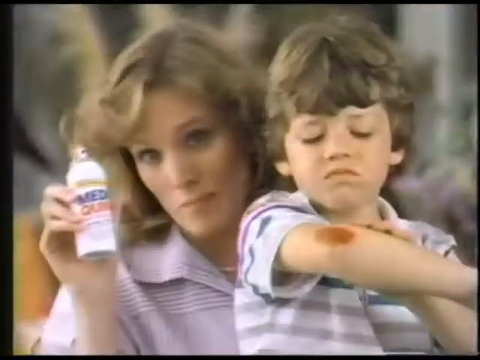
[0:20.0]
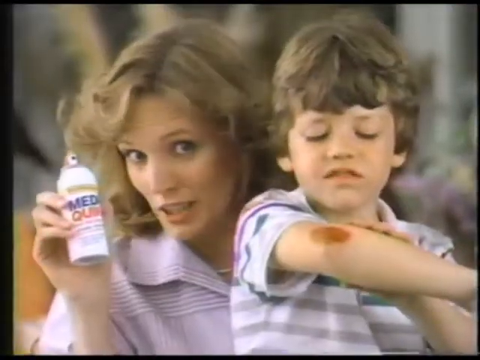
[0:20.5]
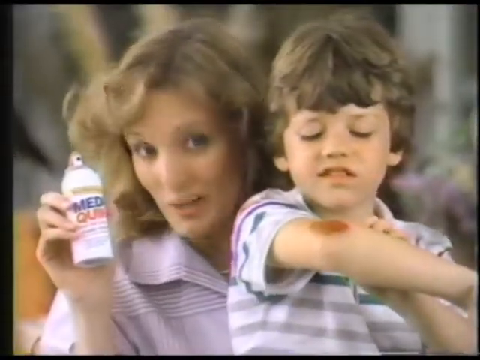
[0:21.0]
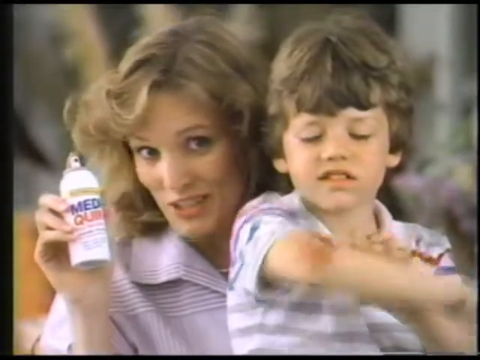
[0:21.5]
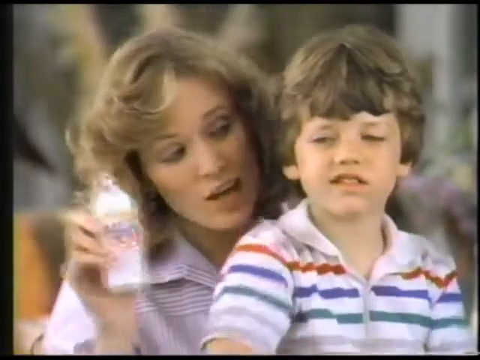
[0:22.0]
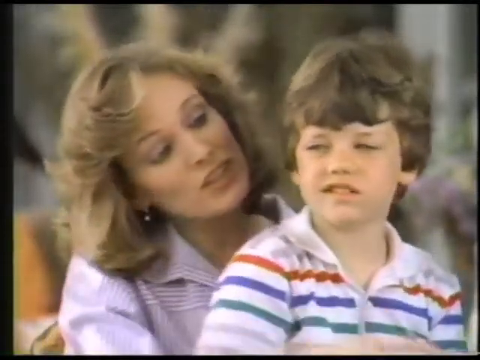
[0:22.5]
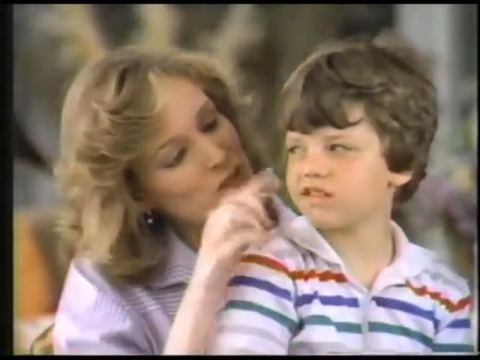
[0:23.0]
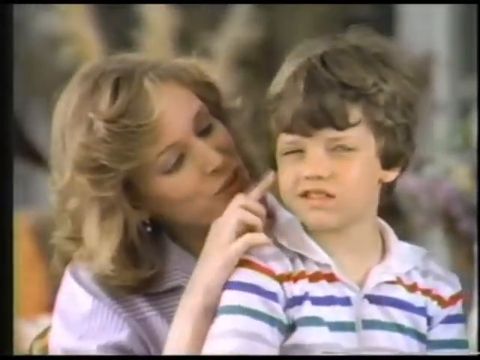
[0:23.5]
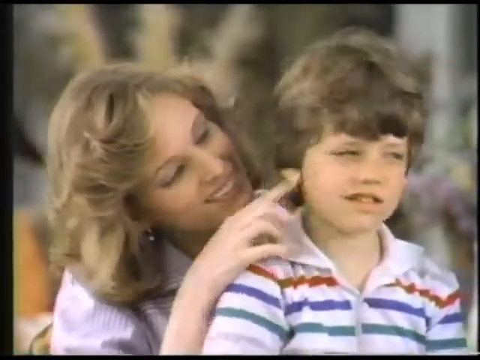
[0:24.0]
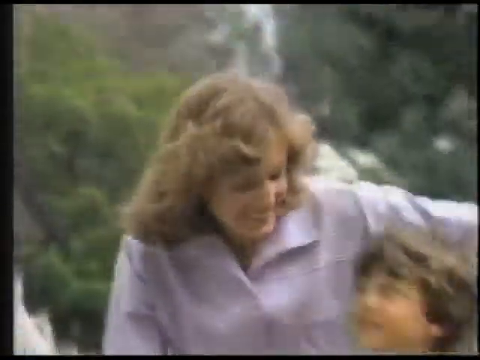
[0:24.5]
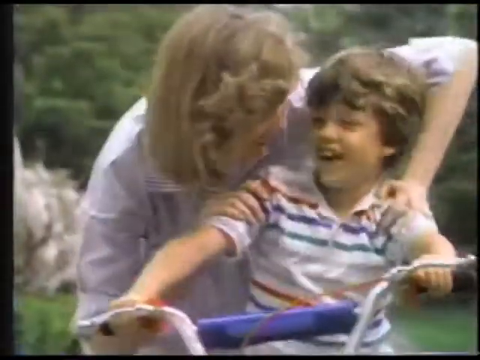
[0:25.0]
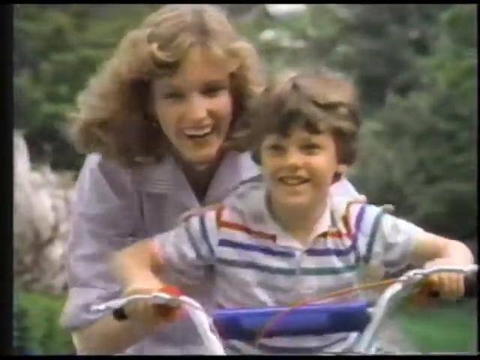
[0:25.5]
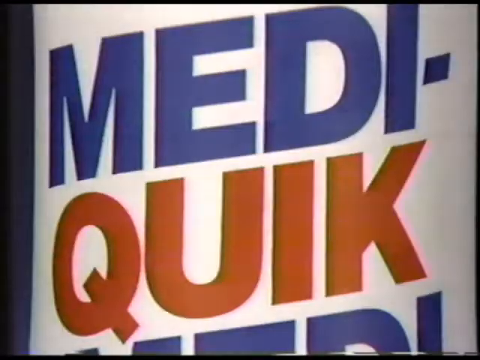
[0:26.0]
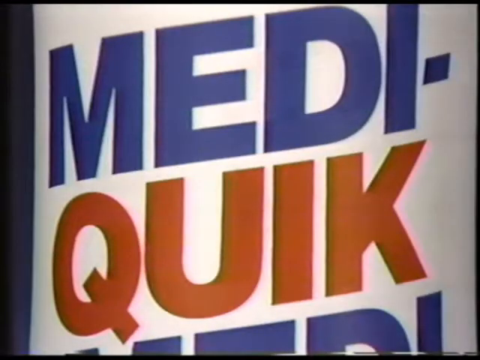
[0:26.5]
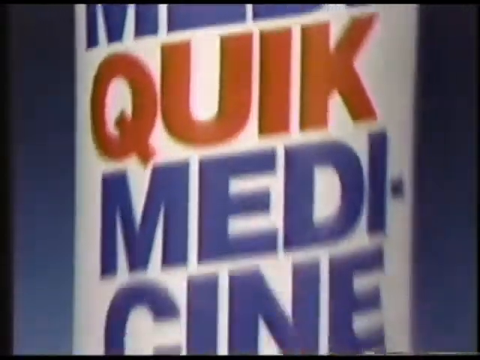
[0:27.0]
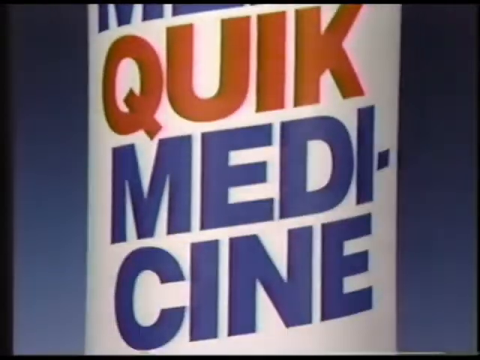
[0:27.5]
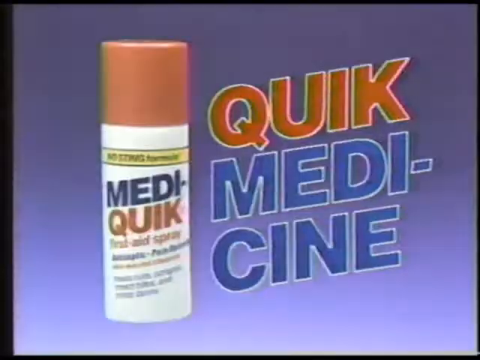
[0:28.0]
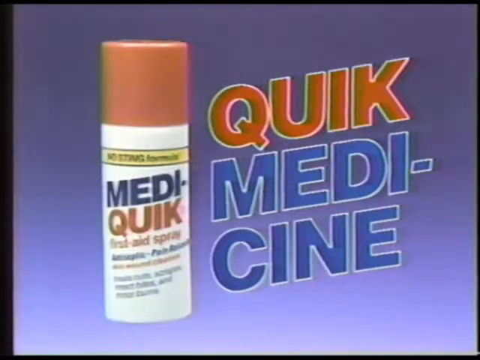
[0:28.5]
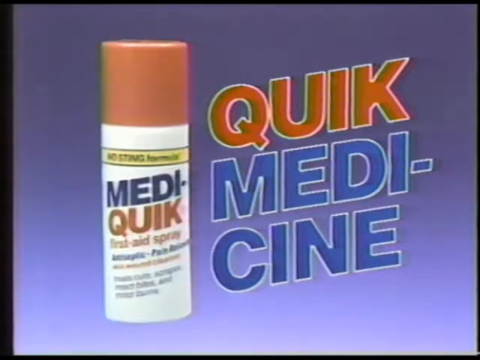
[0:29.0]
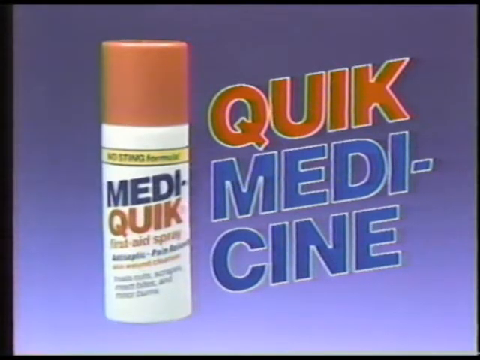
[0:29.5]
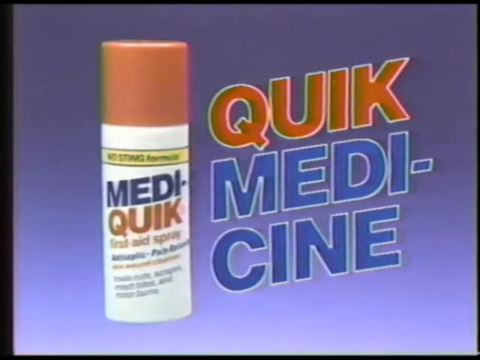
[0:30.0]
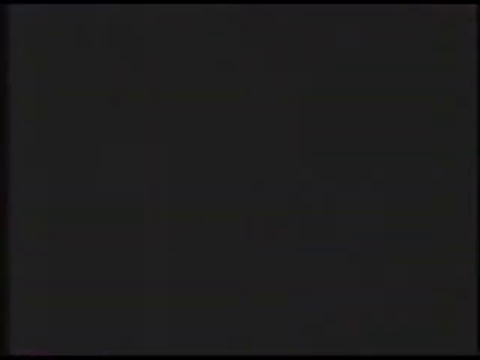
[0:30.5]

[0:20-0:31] The boy looks at the big gash near his elbow while the woman talks at the camera, holding the Mediquik product, and touches the boy's cheeks with her finger. In another shot, the boy is back on the bike and the woman, apparently the mother, is behind him with her left arm on his left shoulder, saying something into his ear; he smiles and rides the bike. The Mediquik bottle is shown again. At the end the final product appears, and on the right it says "quick medicine". The medicine looks like a mini spray can with a red cap at the top that is about a third of the size of the whole bottle. The bottle is white with the word "Mediquik" (spelled M-E-D-I-Q-U-I-K), with "quik" in red and "medicine" in blue; it is kind of tilted upward, maybe 30 degrees. At the bottom it says "first aid spray", along with some smaller text that is hard to read because of the video's quality. The video then fades to black.